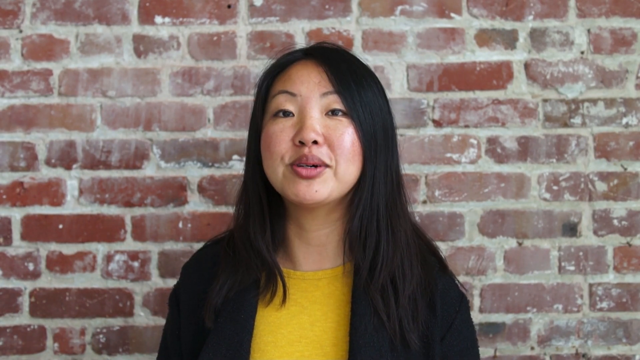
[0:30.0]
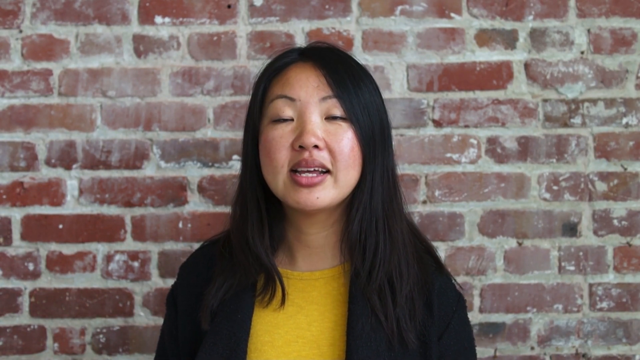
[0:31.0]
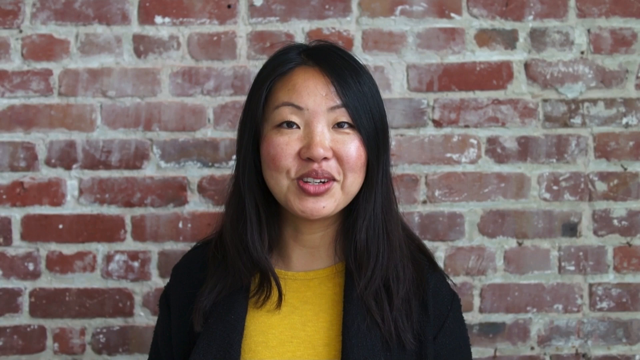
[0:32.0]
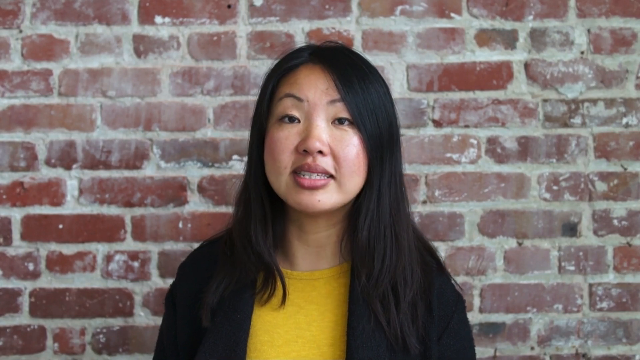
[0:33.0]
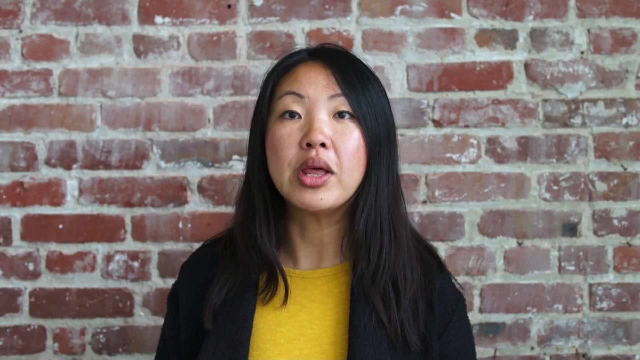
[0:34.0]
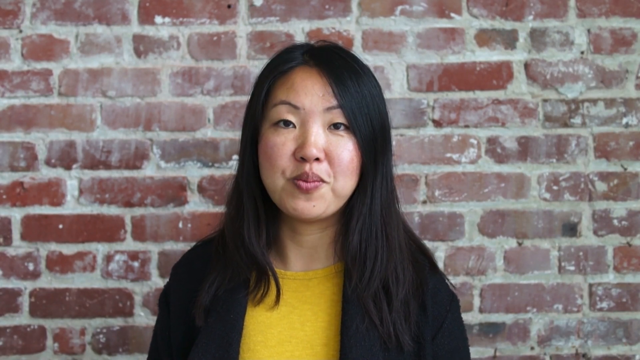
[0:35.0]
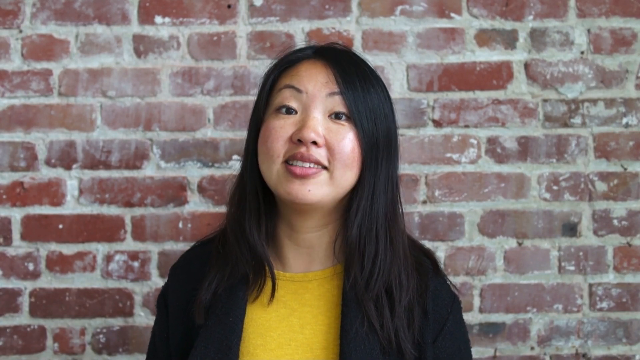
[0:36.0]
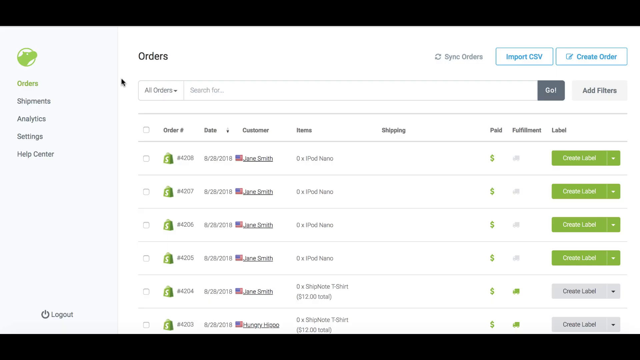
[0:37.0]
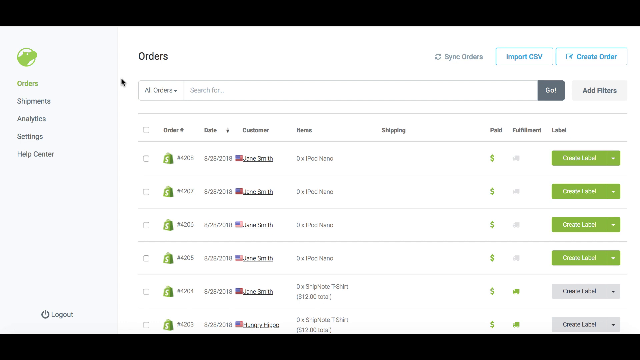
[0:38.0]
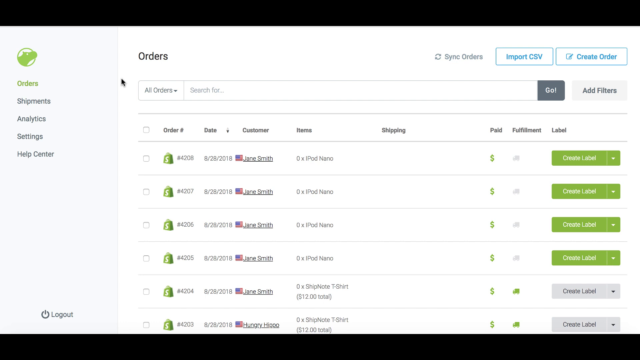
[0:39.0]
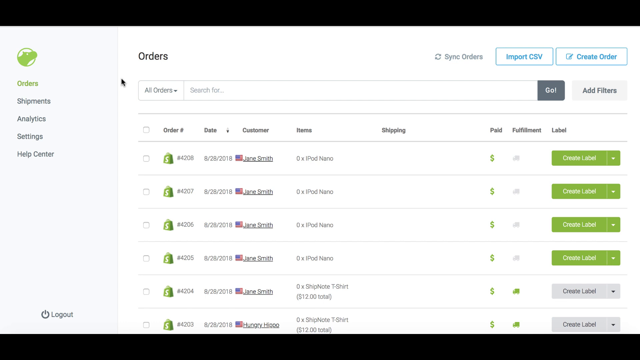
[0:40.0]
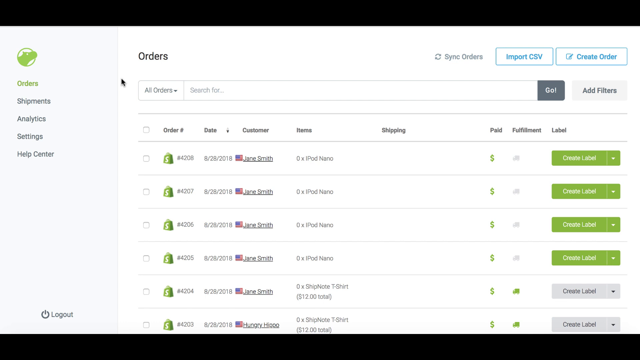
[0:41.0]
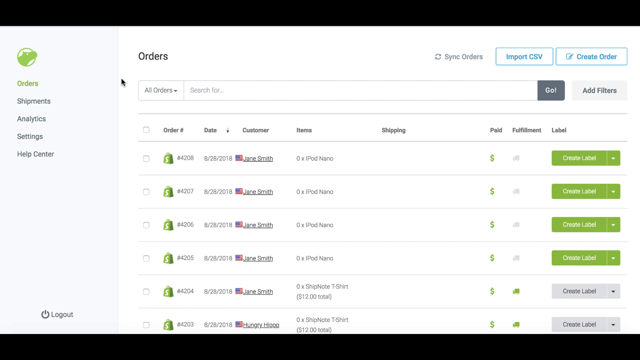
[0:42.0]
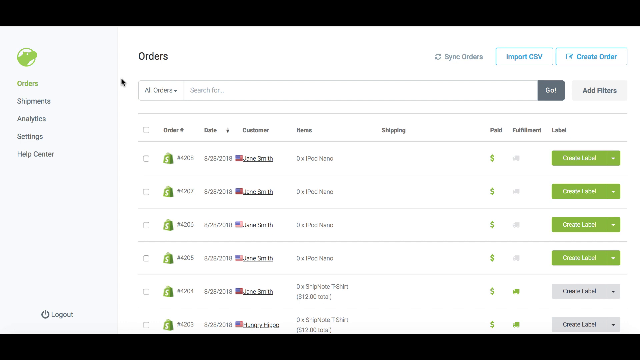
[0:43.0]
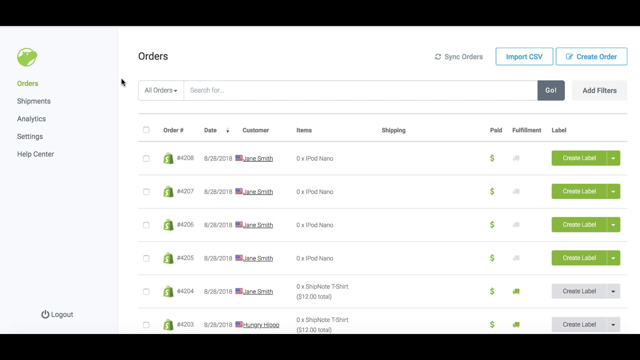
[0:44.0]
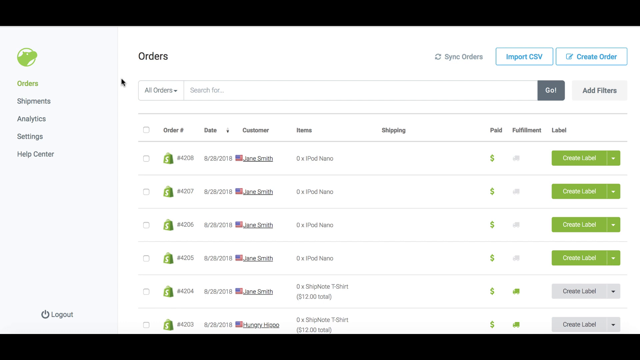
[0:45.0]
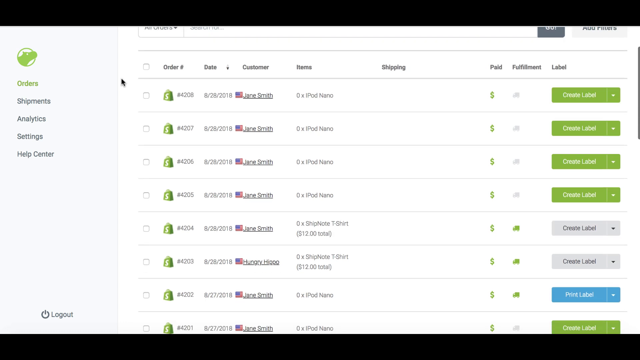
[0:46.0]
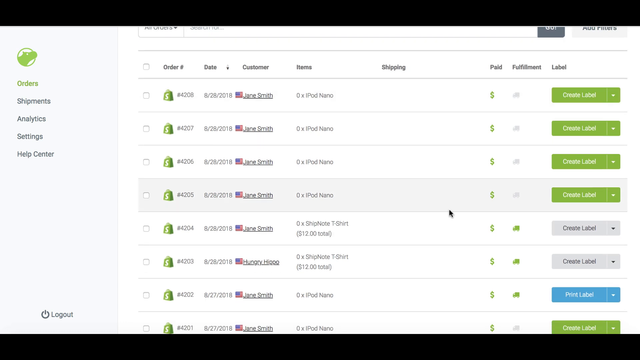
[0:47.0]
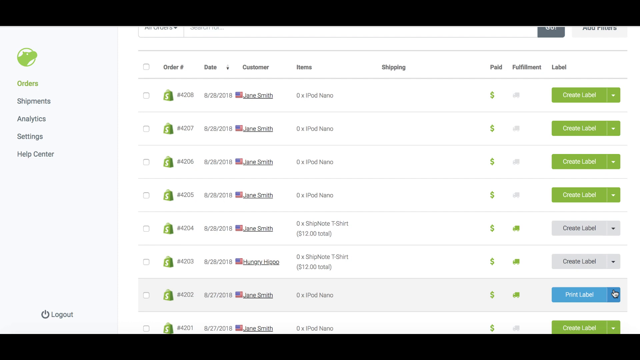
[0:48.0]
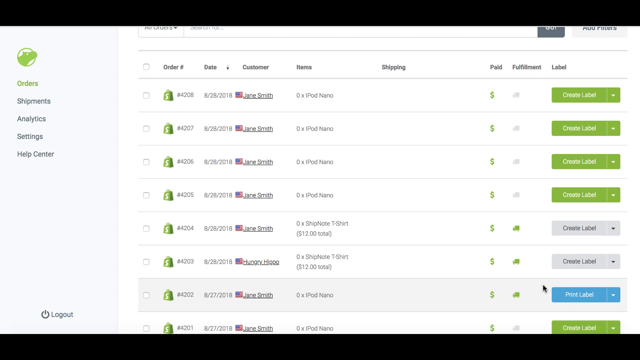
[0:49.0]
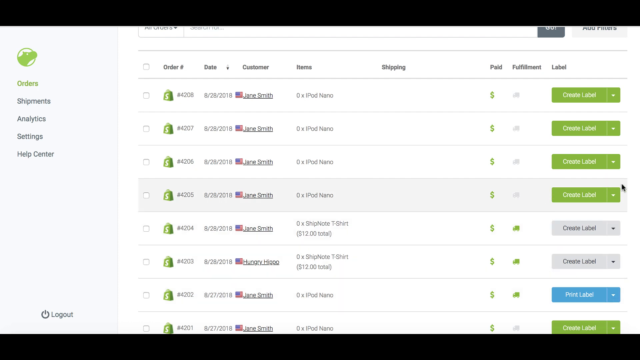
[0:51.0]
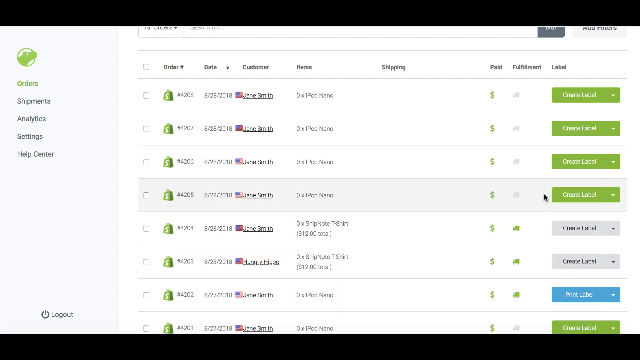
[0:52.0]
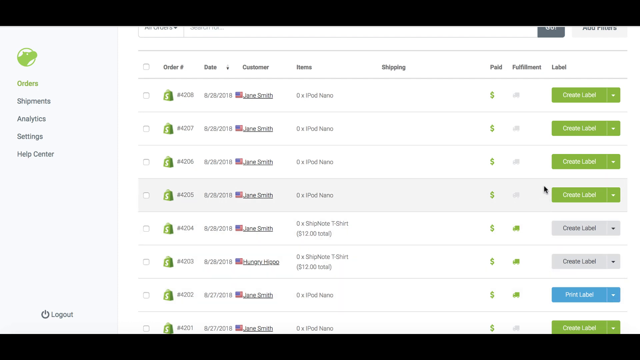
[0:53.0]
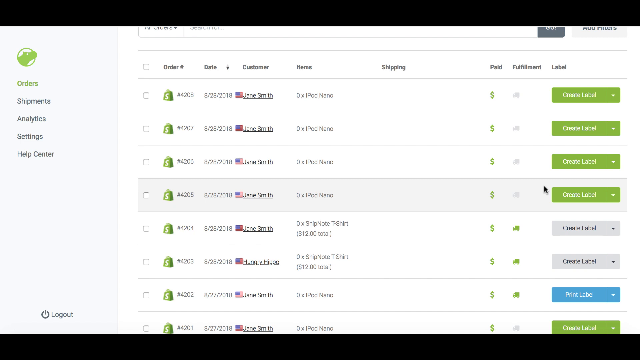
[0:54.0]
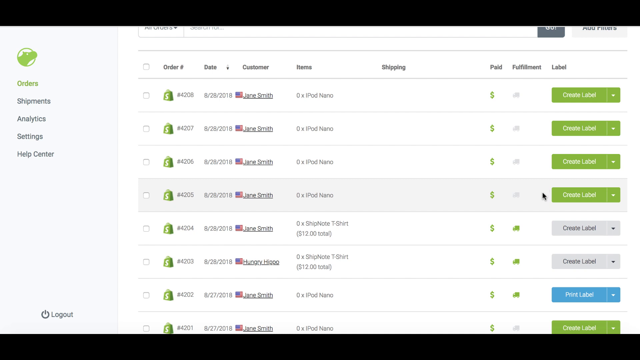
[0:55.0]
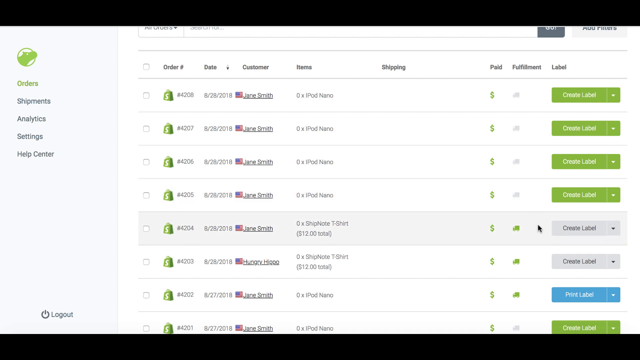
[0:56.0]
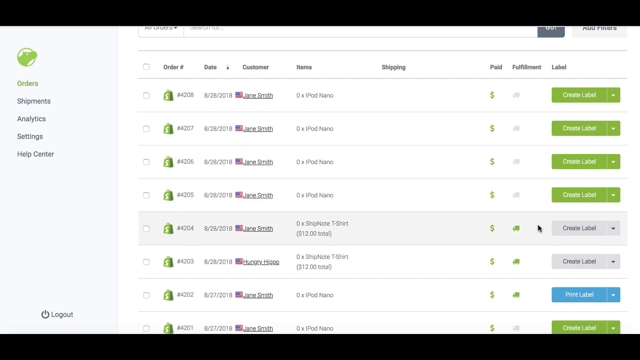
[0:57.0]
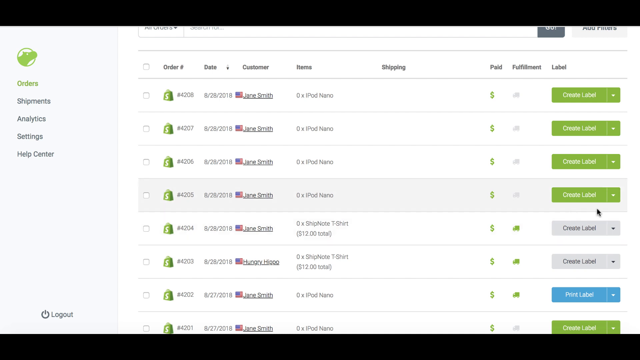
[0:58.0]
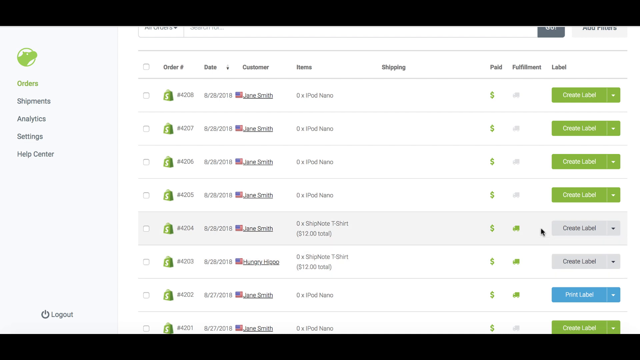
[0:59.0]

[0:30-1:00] The young Asian woman wears a yellow shirt and a black jacket and has straight hair. She stands in front of a brick wall smeared with concrete or chalk, giving the tops of the bricks a kind of white sheen. She then shows the company's orders page. A hippo image is at the top left, and the menu reads "Orders," "Shipments," "Analytics," "Settings," and "Help Center," with Orders selected. Under Orders, the name James Smith is listed for every entry, and no dollar amount, fulfillment, or shipping method is shown. She scrolls down the page and shows where a label can be printed on one side or created on the other side for some of the names.